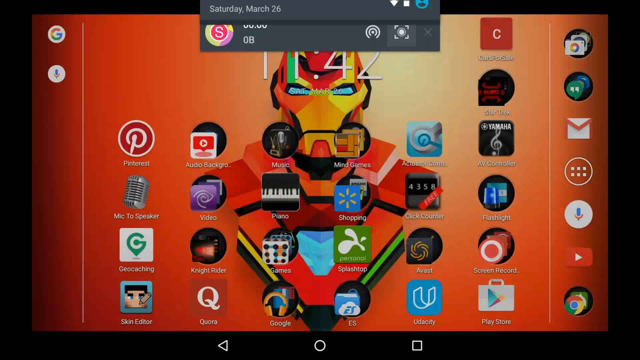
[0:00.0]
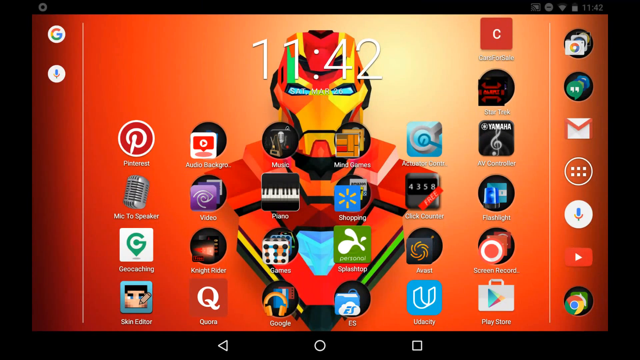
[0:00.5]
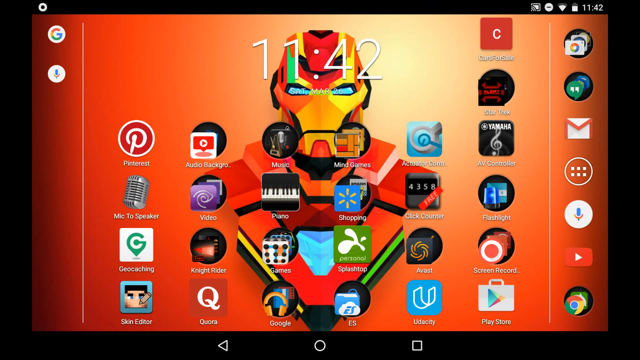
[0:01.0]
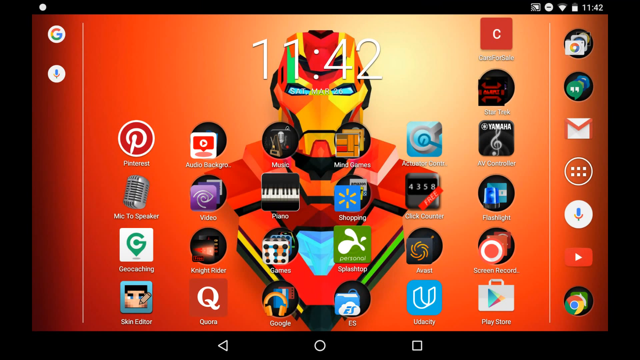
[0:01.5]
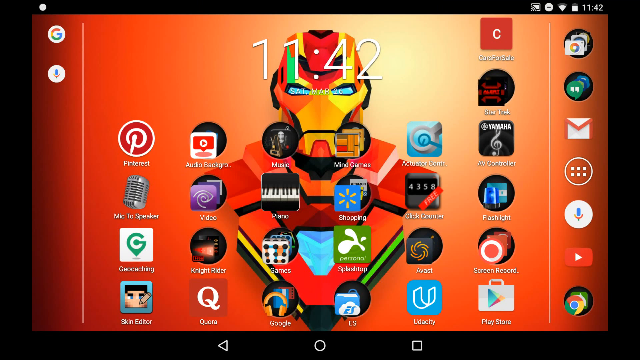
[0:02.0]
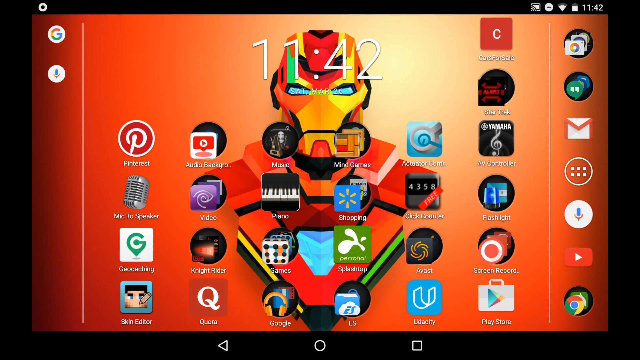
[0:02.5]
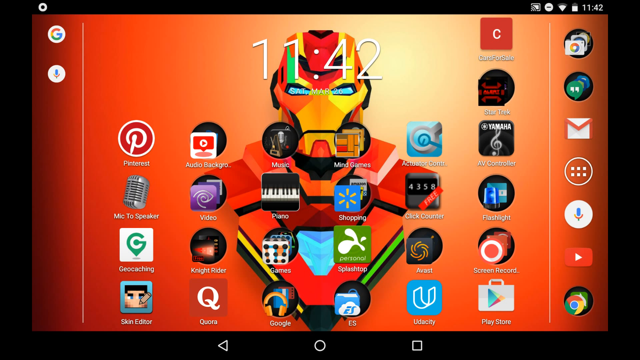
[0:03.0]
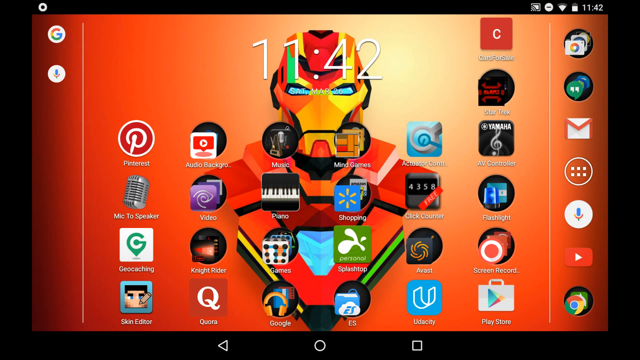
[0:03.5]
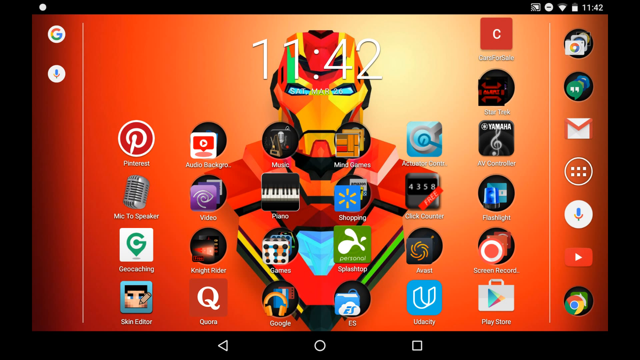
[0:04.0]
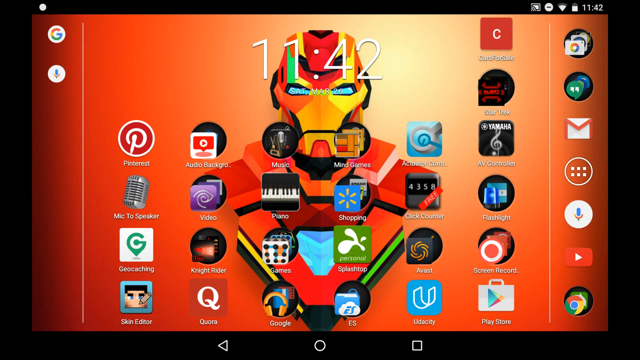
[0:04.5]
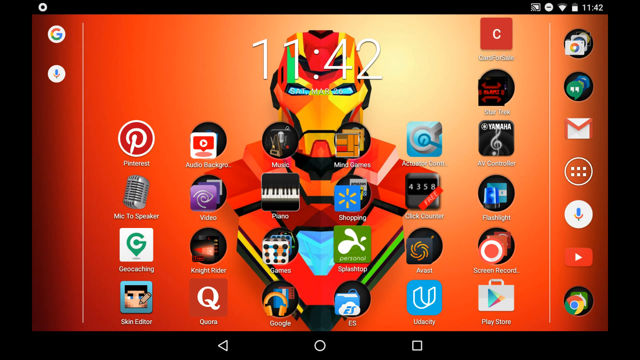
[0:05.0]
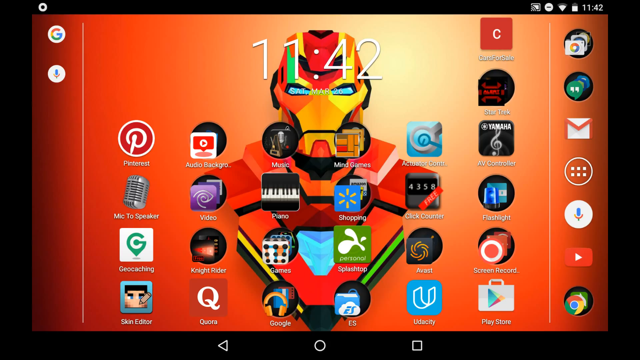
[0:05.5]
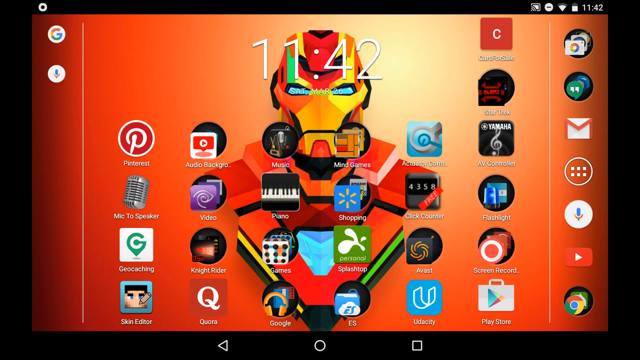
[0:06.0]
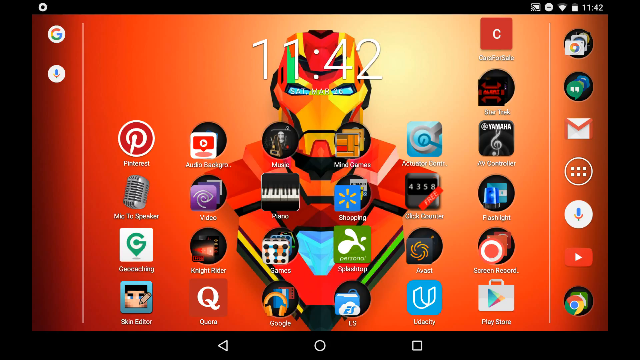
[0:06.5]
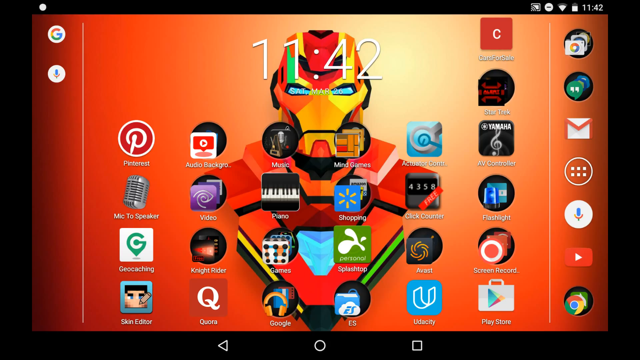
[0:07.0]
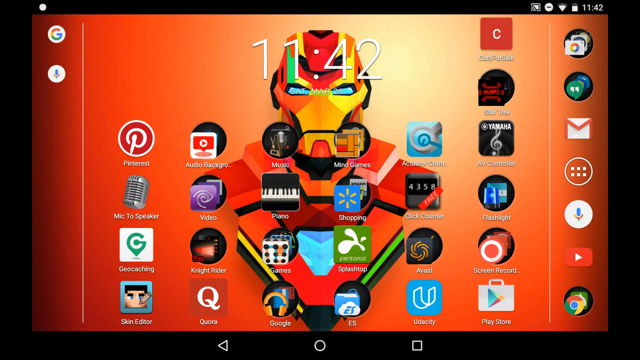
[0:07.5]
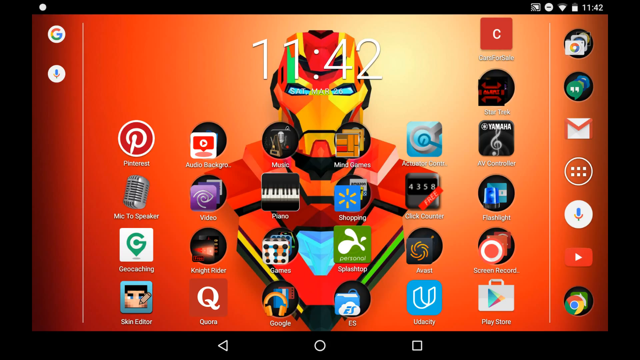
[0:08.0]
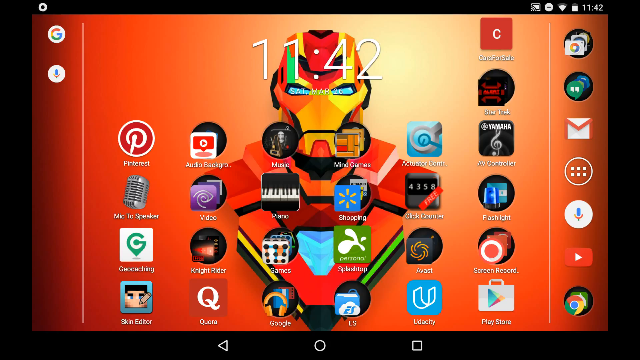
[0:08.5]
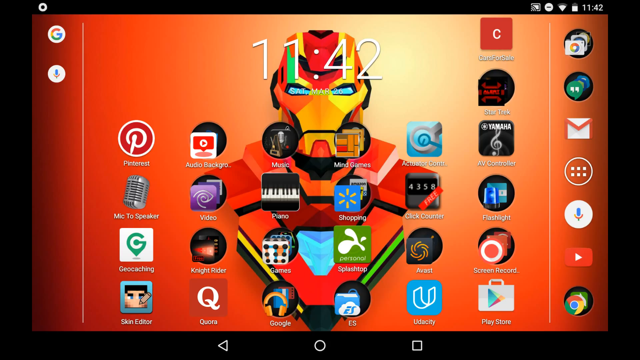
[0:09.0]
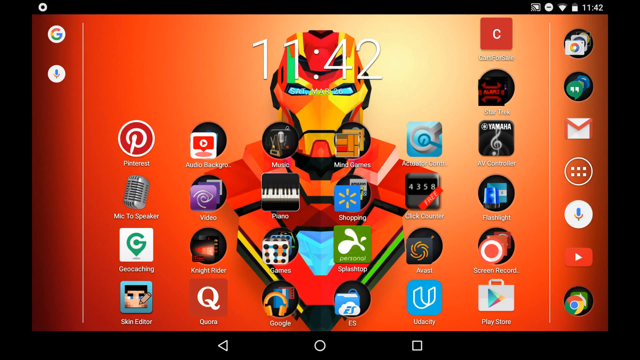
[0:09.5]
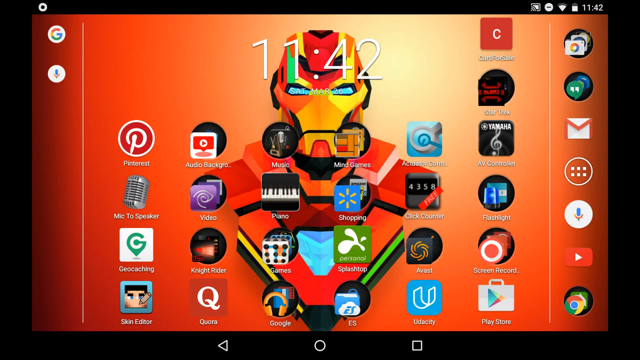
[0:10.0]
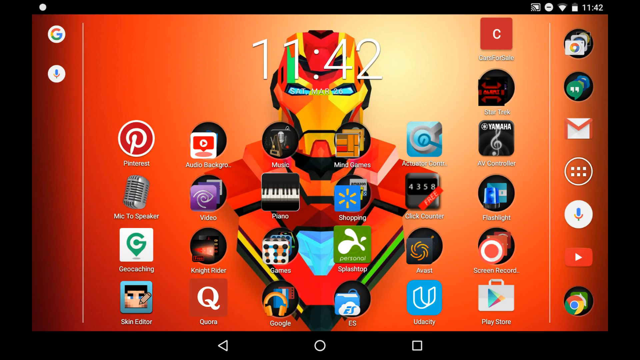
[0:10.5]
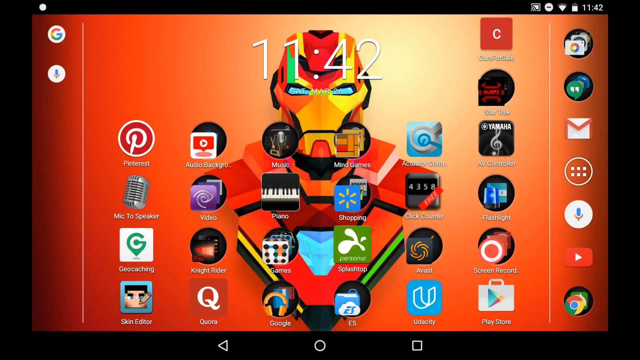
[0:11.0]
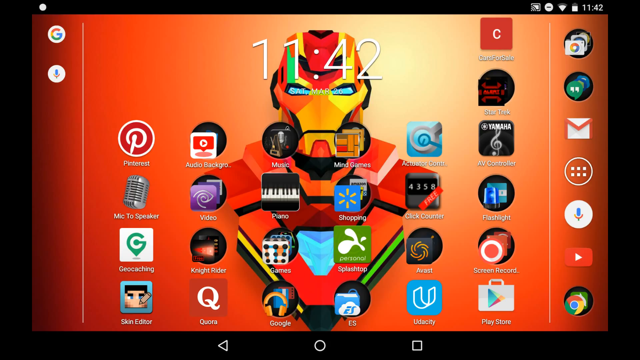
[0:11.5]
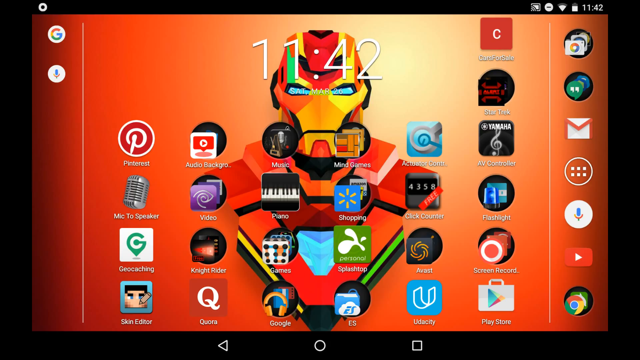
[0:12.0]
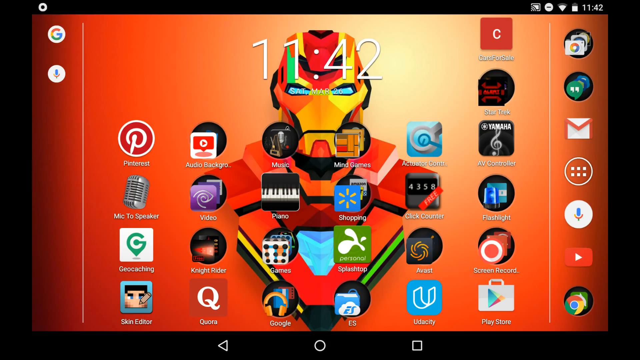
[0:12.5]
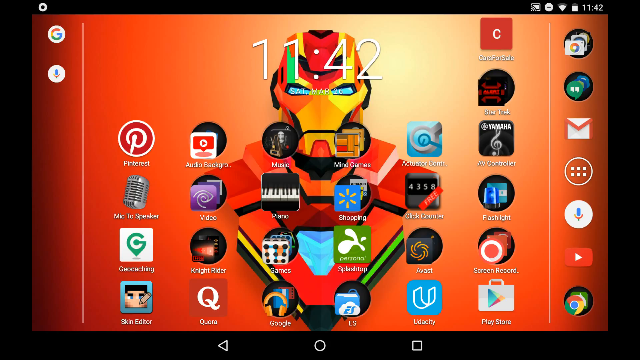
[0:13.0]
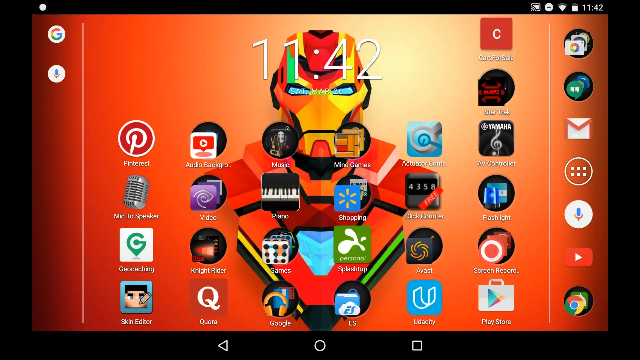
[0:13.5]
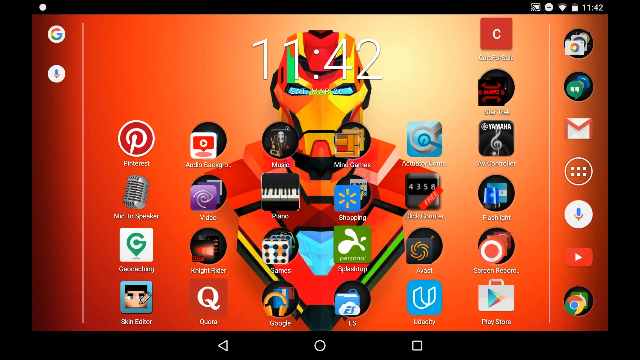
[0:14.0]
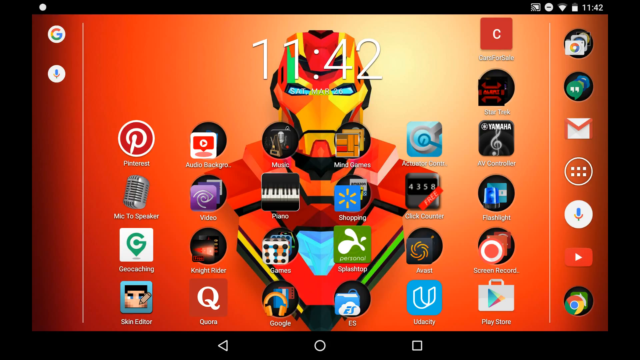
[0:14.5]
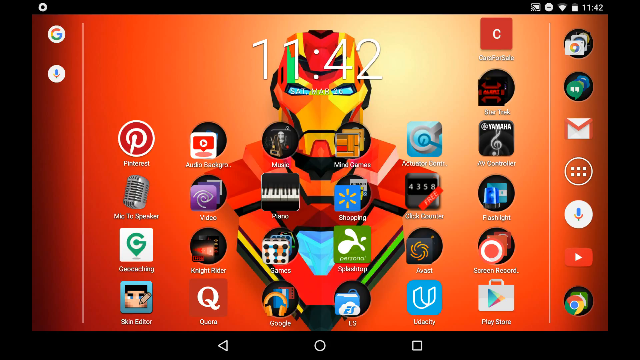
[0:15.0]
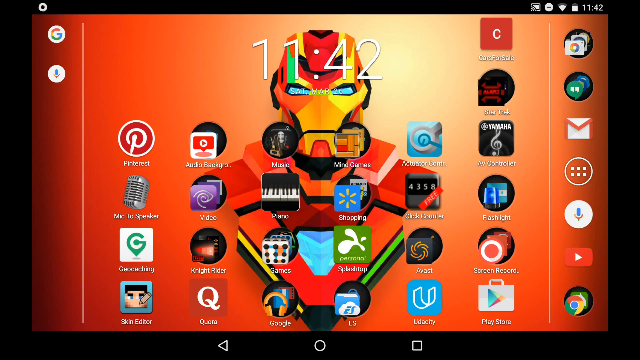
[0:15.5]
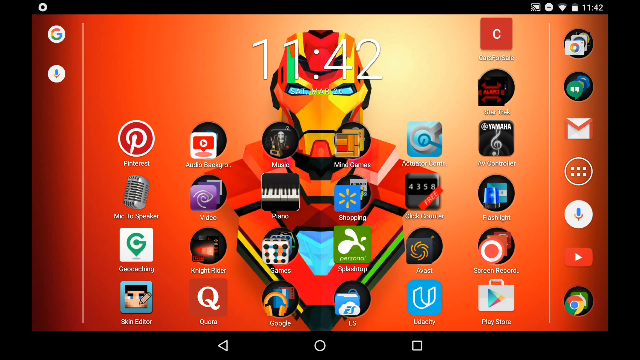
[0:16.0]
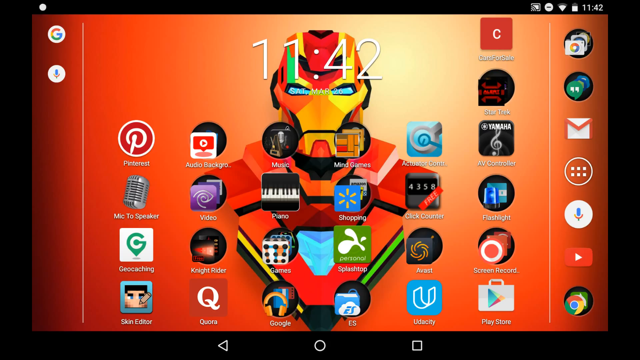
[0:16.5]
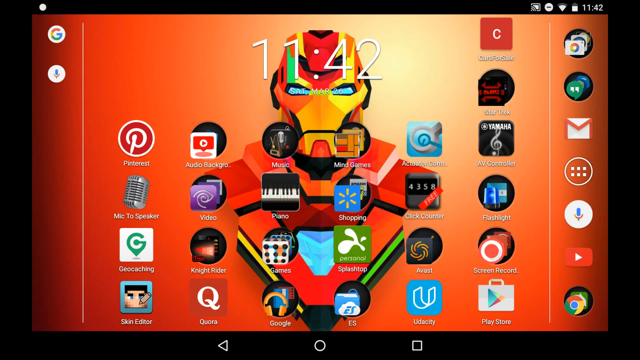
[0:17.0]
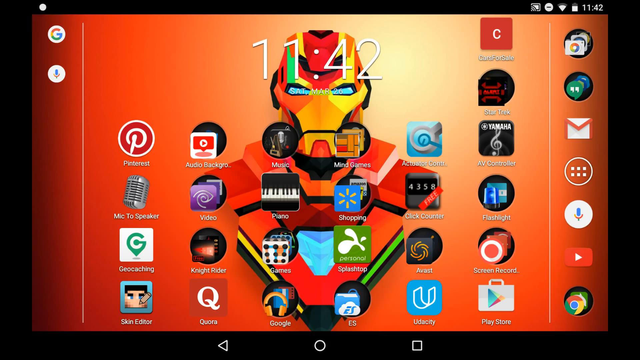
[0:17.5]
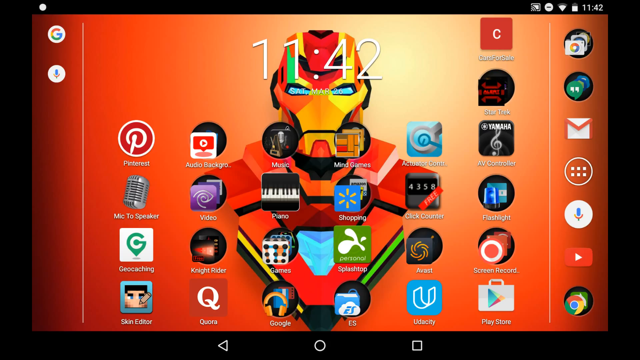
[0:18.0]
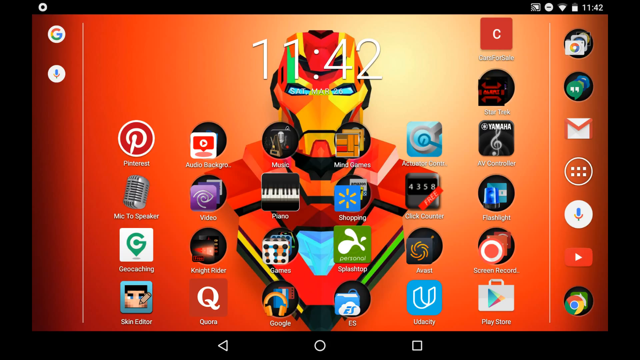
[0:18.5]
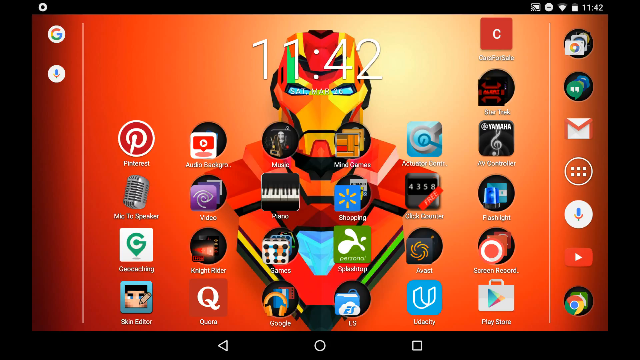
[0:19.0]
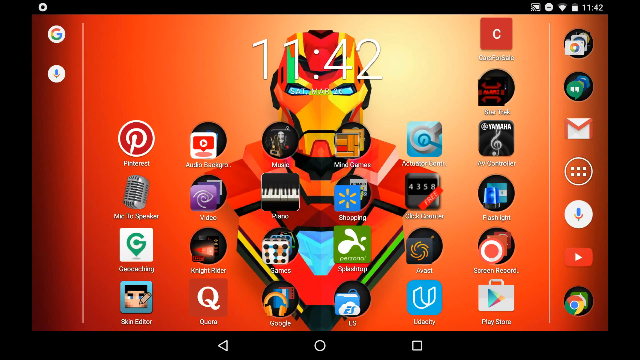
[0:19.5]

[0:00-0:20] A screen showing app logos appears, apparently on a tablet. The apps include Pinterest, Mic to Speaker, Geocaching, Skin Editor, Quora, Google, ES, Udacity, Play Store, Screen Record, Splashtop, Shopping for Walmart, Piano, AV Controller, Star Trek, Cars for Sale, Gmail, a microphone, YouTube, Chrome, and Messages, over an Iron Man background. The time is 11:42. A little circle in the top left corner moves, closing and opening repeatedly. A small notification then appears at the top, showing Saturday, March 26th. Icons in the top right corner appear to be a screencast icon, a Wi-Fi icon, and a battery icon, along with the time reading 11:42. Additional icons on the screen say Avast, Knight Rider, and Mind Games, and there are other miscellaneous icons and apps along with a back button.